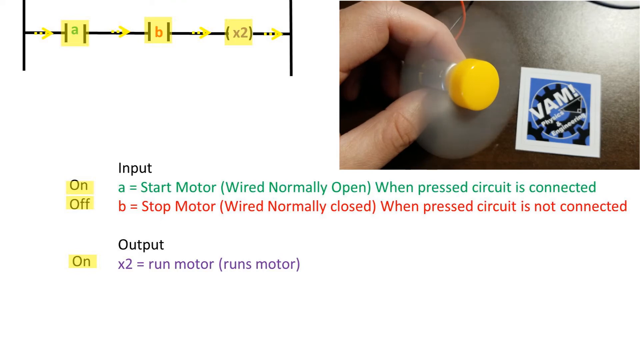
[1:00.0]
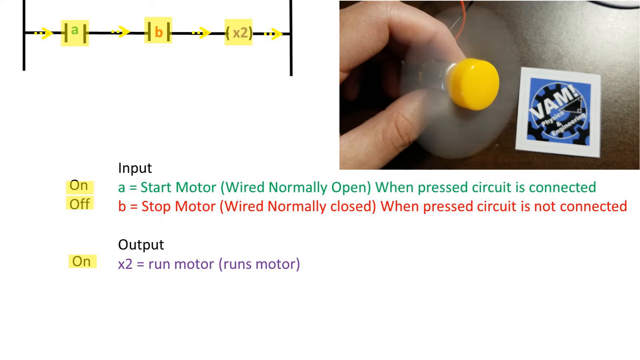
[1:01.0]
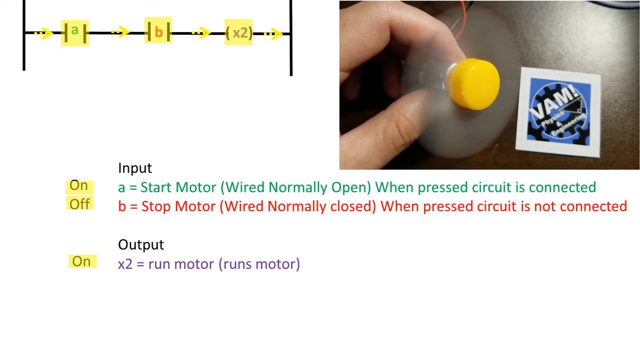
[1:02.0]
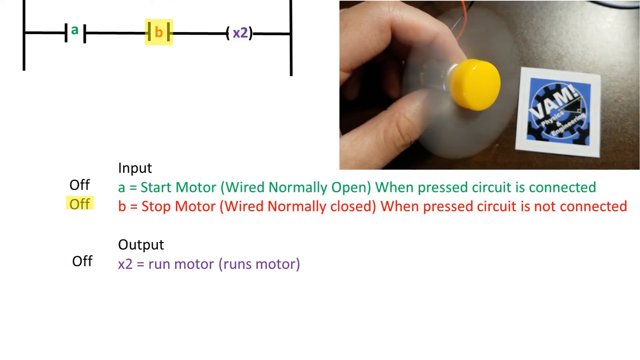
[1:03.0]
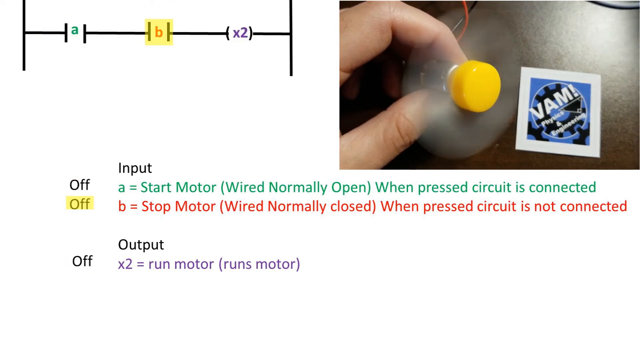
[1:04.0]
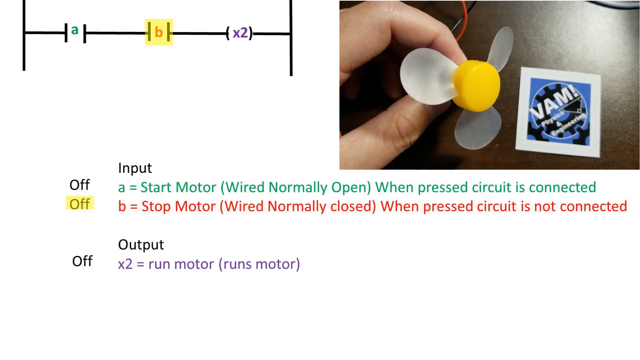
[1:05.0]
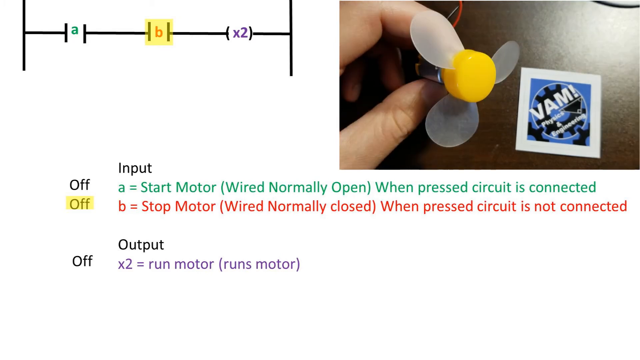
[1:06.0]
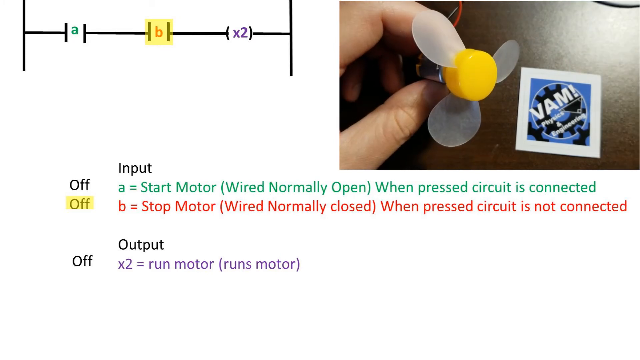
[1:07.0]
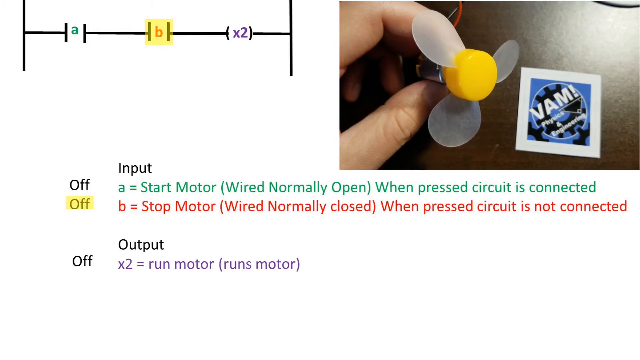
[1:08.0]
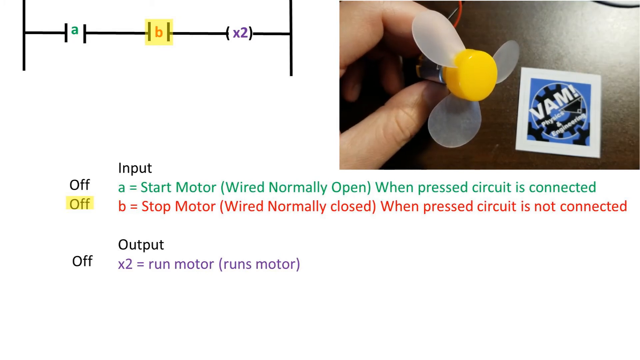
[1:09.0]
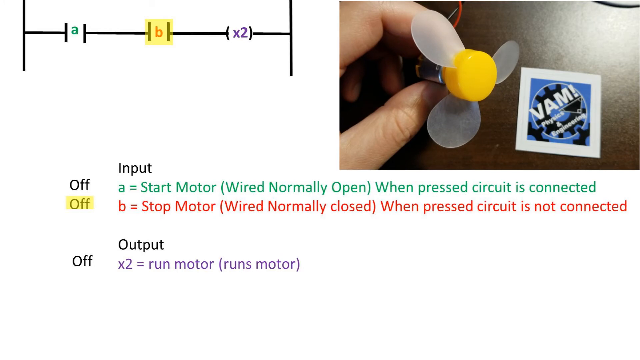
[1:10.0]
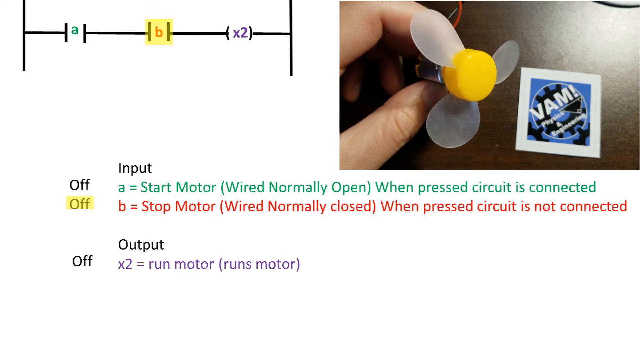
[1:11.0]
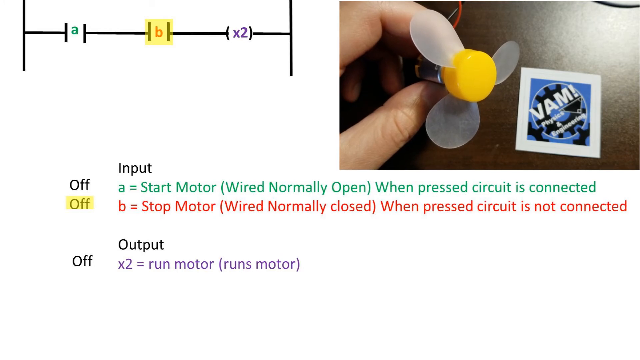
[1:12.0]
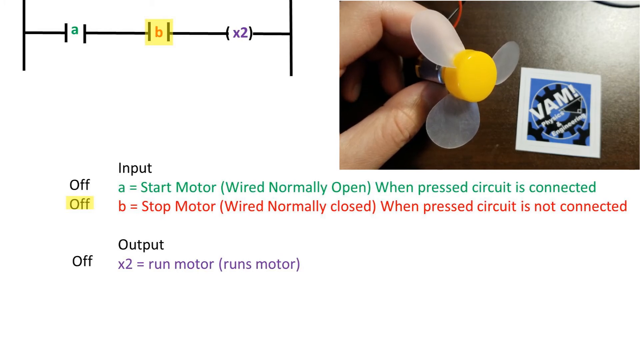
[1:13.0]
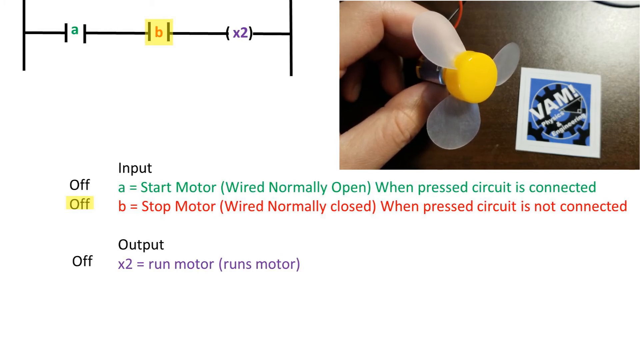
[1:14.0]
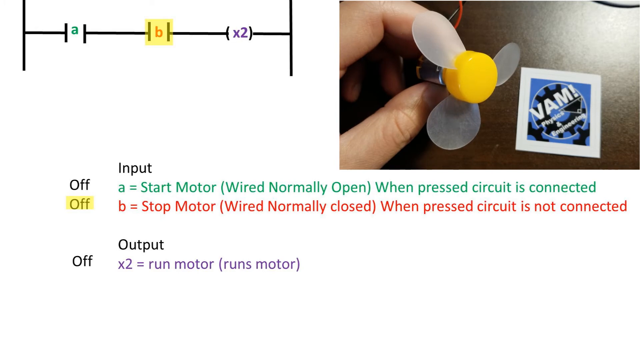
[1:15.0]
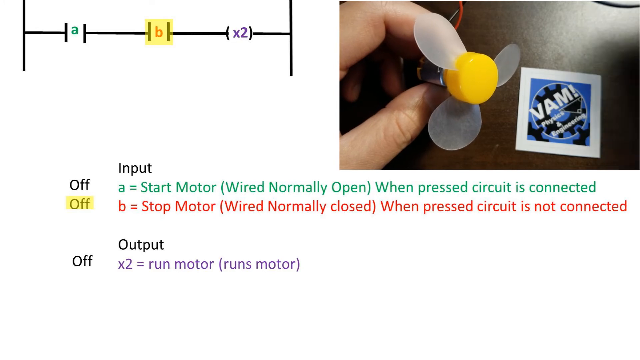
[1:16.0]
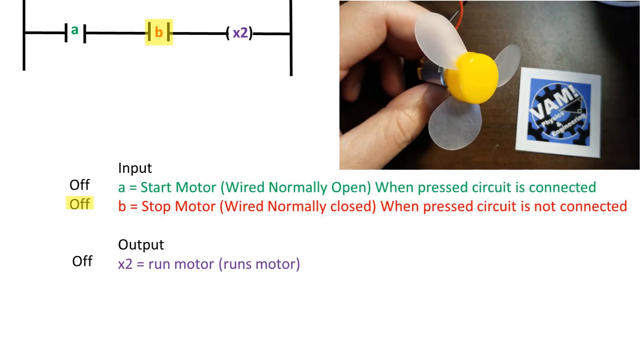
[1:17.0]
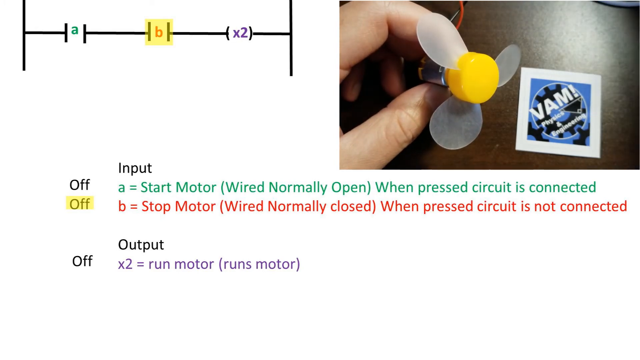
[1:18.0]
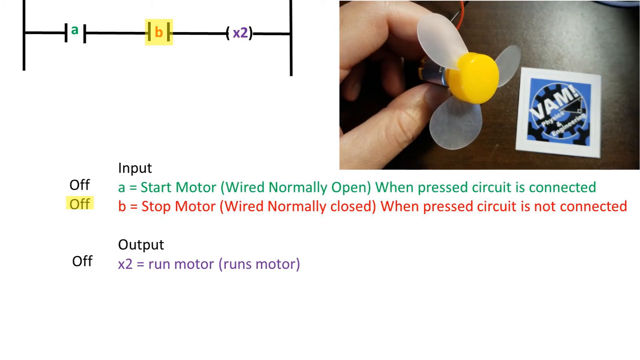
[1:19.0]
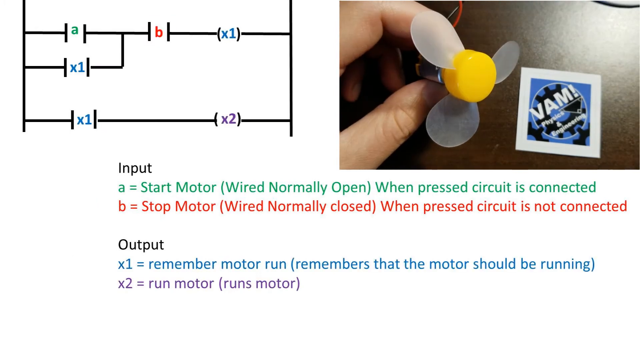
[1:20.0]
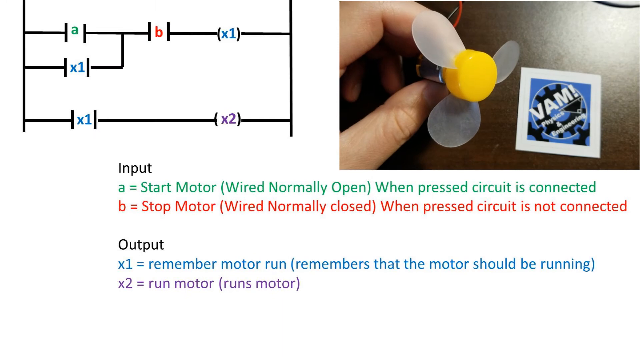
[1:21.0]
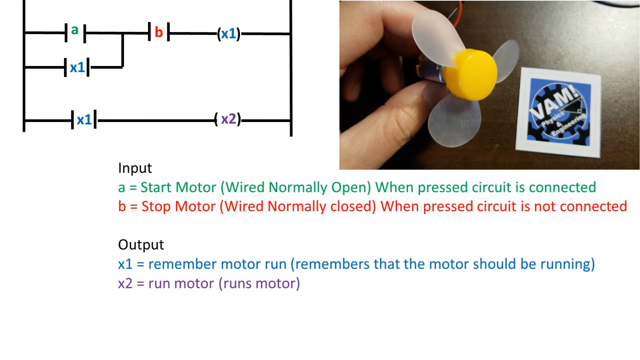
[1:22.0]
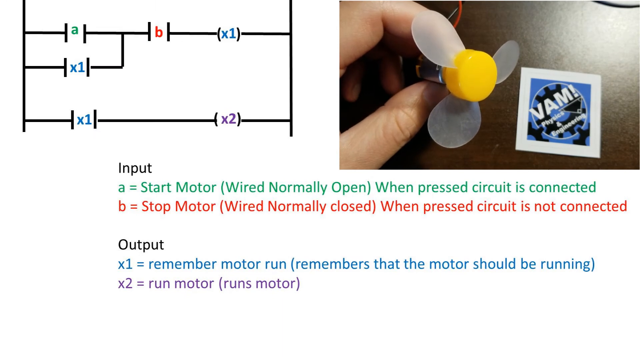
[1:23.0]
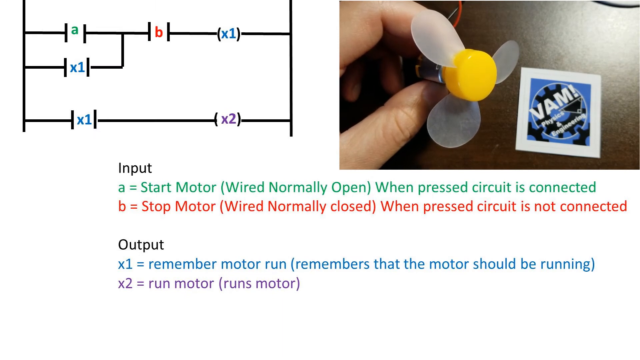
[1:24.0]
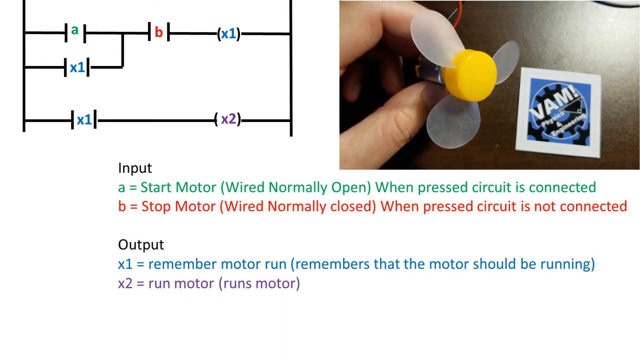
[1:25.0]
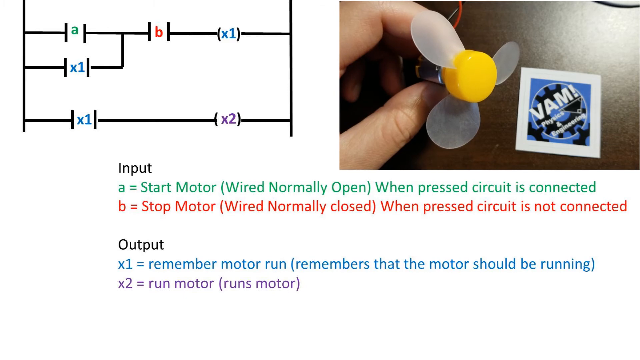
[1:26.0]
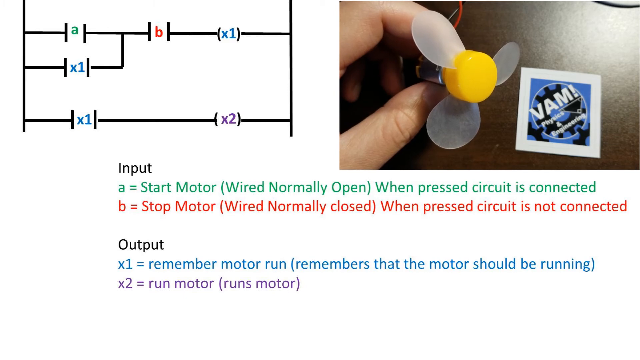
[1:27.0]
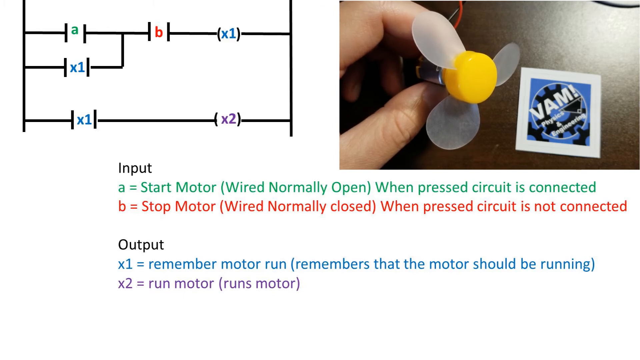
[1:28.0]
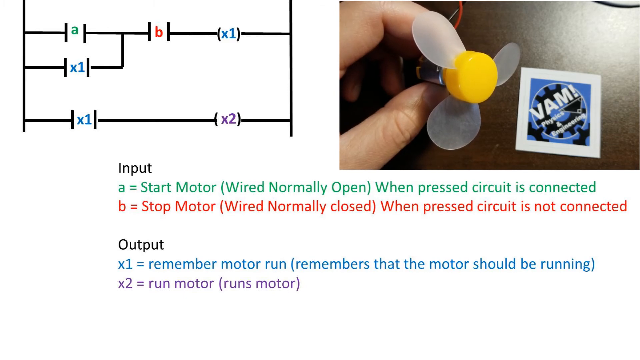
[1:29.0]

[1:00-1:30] The title "Intro to mechanical part 2" appears. The experiment's instructions lay out each stage to take, with all the stages highlighted in different colors. In the upper left corner, a hand holds the flower-like object used in the experiment, with two cords, one red and one black, behind it, apparently for electricity. The object then runs. A logo reading "Vam" in blue is in the lower corner, possibly the name of the company running the experiment.